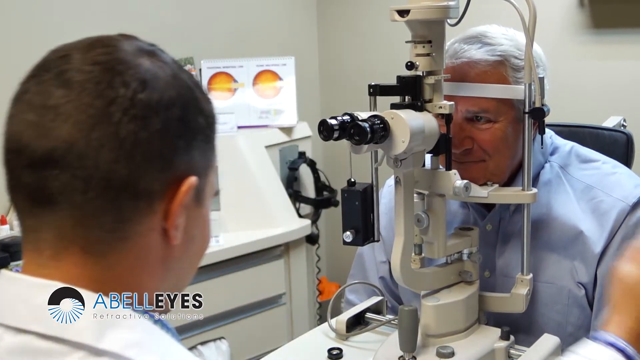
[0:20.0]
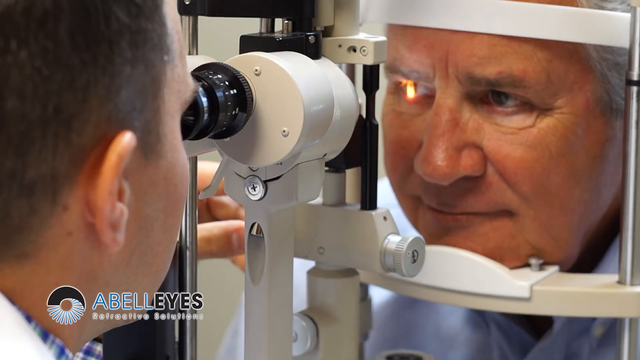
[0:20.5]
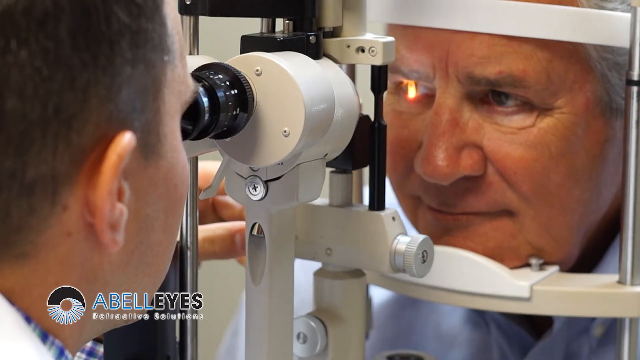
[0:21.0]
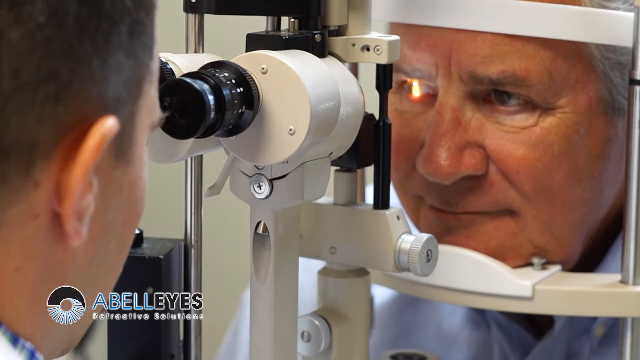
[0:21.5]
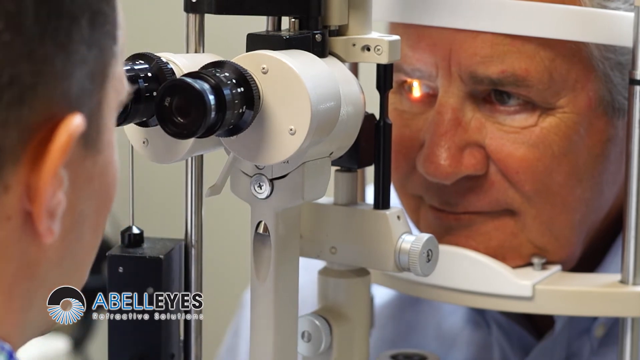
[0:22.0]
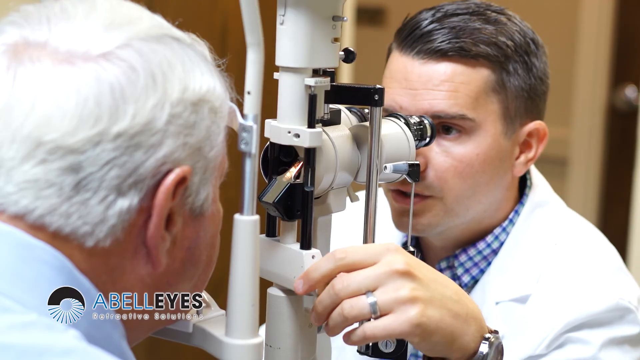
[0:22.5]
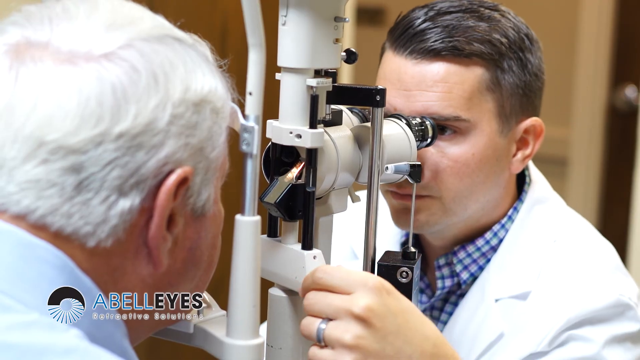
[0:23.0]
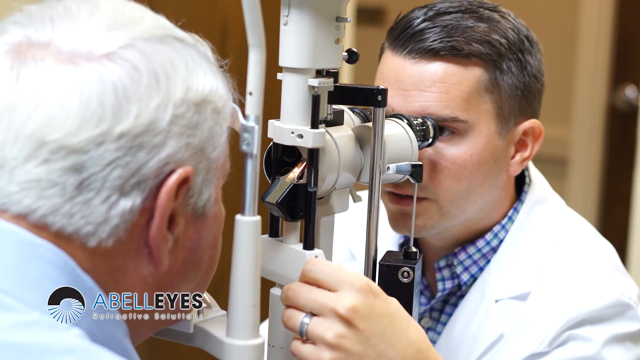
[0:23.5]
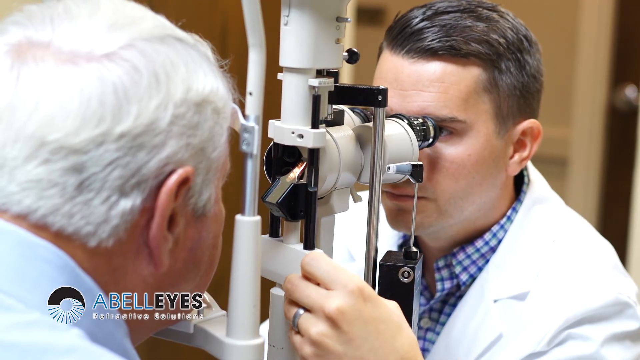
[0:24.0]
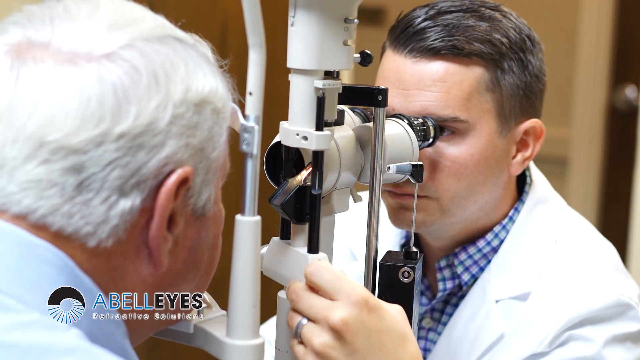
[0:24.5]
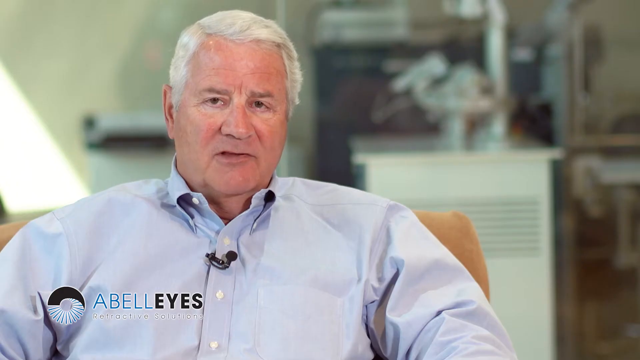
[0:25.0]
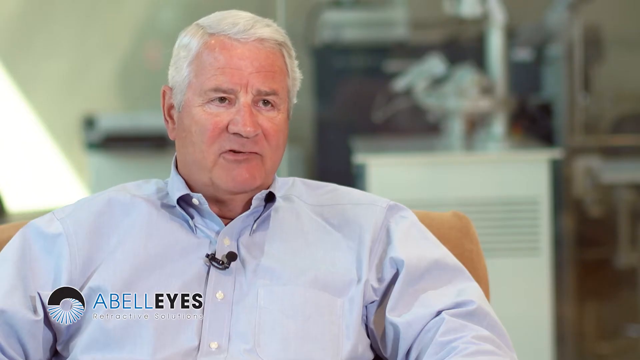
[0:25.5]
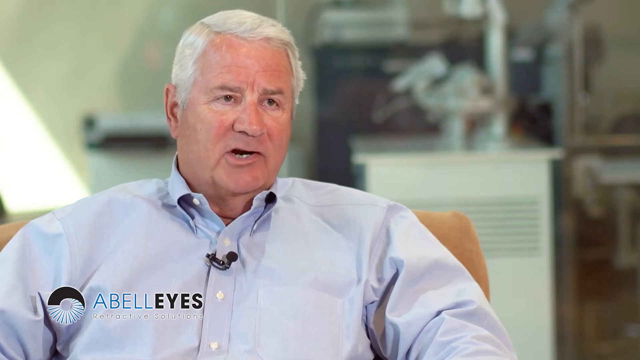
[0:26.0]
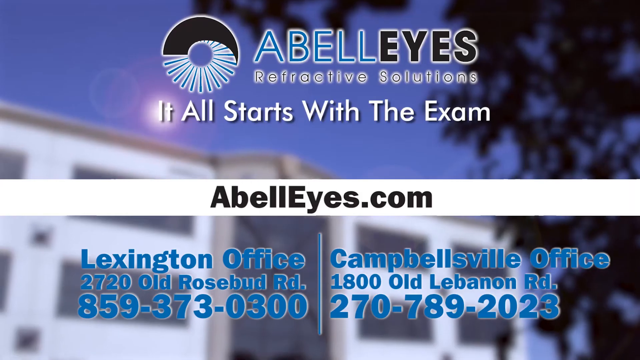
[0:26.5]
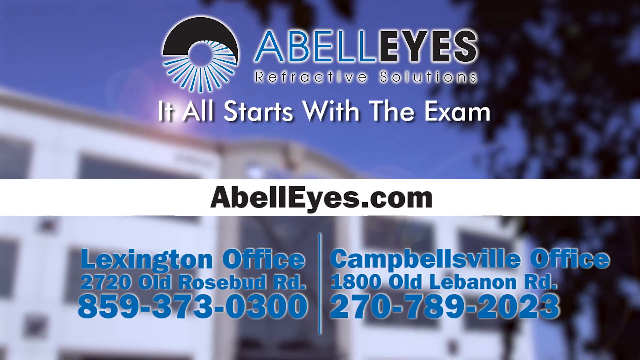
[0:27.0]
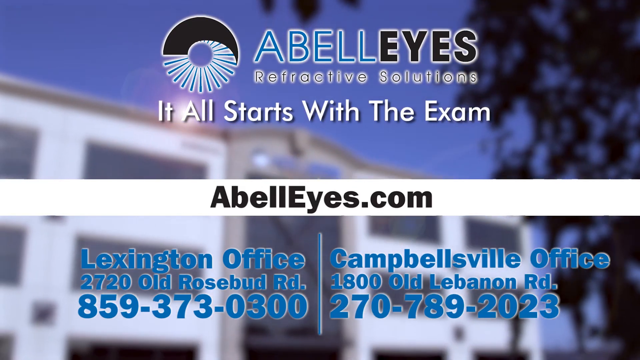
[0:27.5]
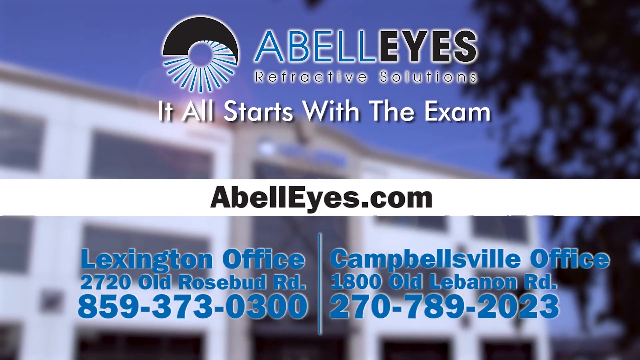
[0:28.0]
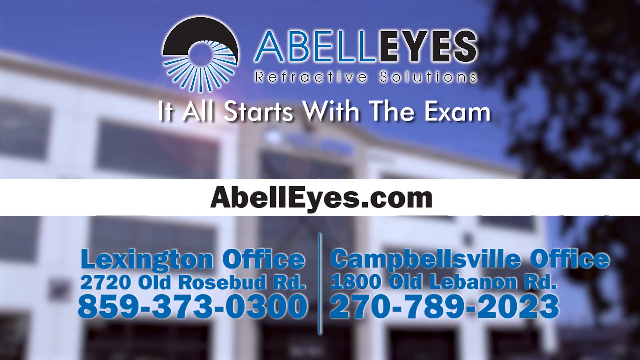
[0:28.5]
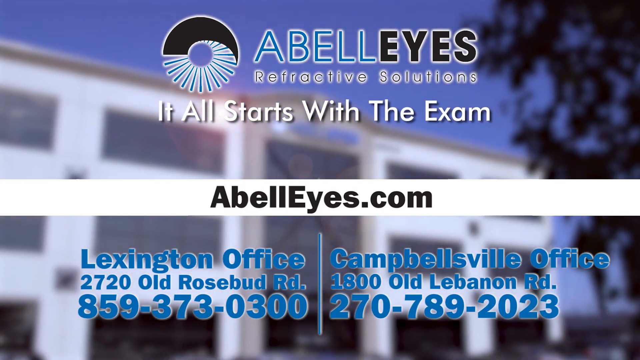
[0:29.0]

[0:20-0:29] The patient, apparently Woodie Leavell, looks into the apparatus that measures his eyes. The doctor, who looks fairly young and wears a lab coat, measures and examines his eyes; he wears a silver wedding ring. At the end, text reads "ABELL eyes," then "refractive solutions" and "it all starts with the exam." Black text then reads "ABELL eyes.com" along with "Lexington office," and a Campbellsville office is listed as well.